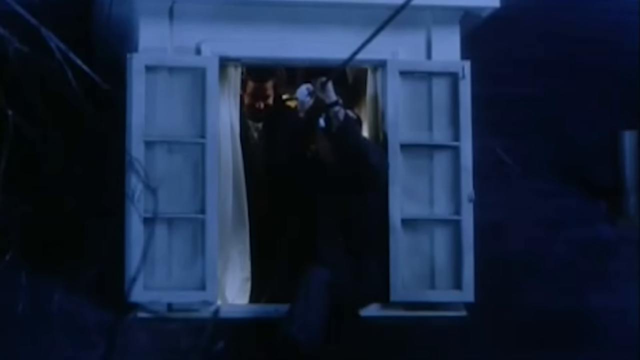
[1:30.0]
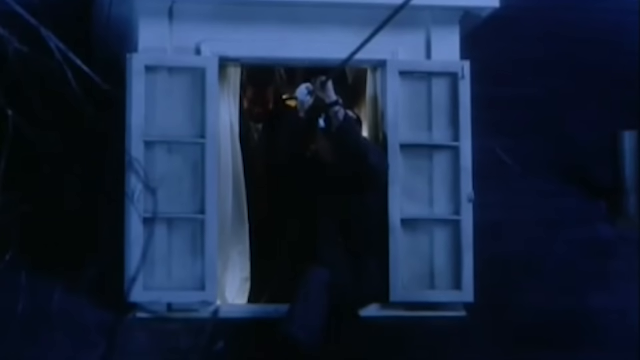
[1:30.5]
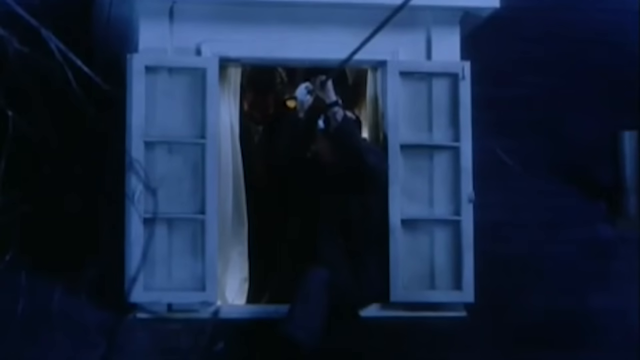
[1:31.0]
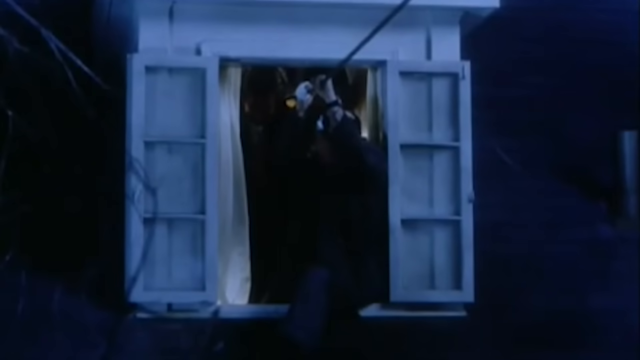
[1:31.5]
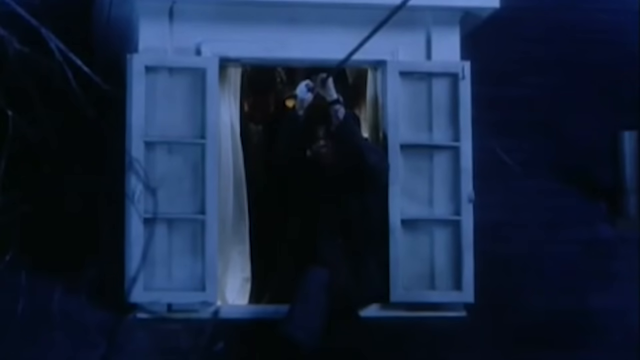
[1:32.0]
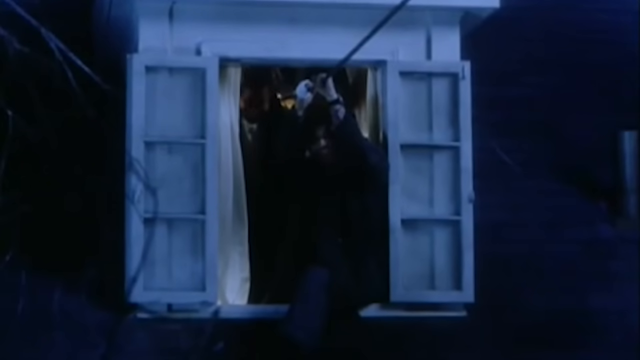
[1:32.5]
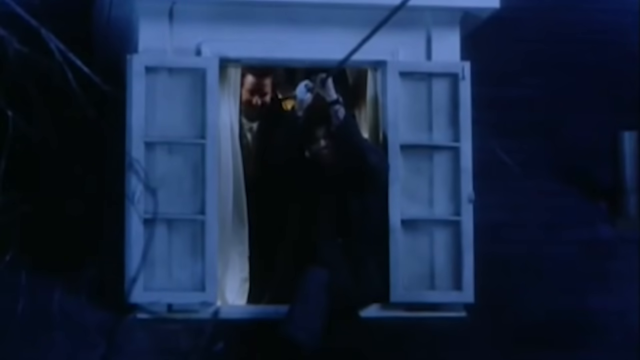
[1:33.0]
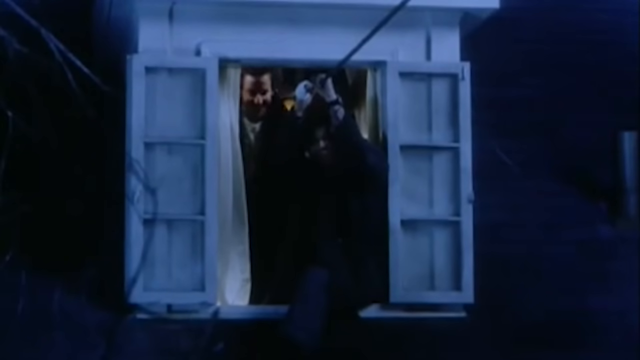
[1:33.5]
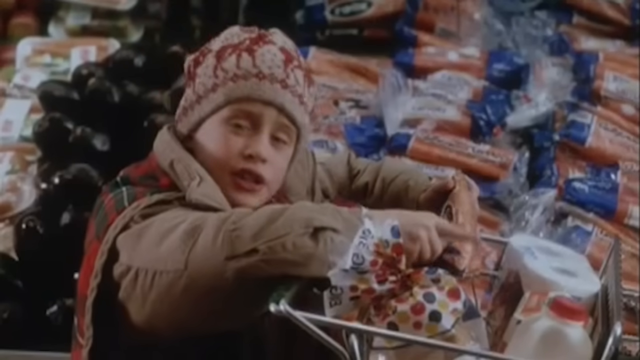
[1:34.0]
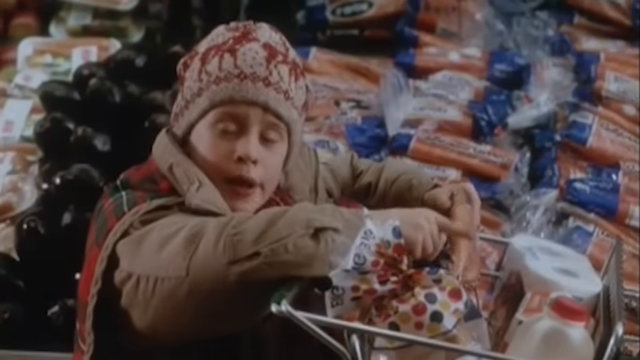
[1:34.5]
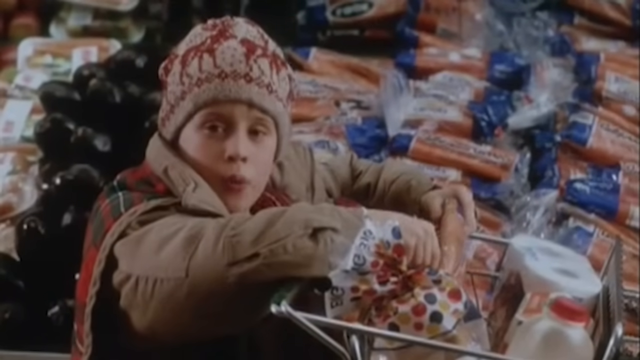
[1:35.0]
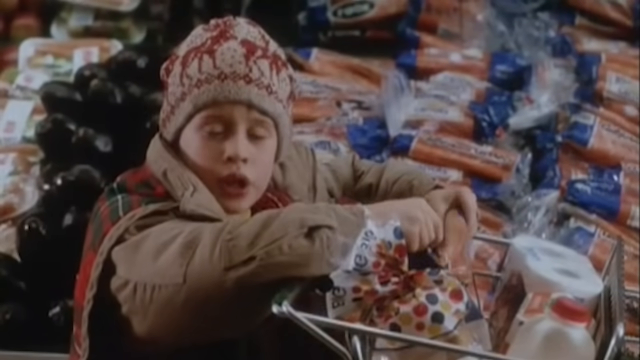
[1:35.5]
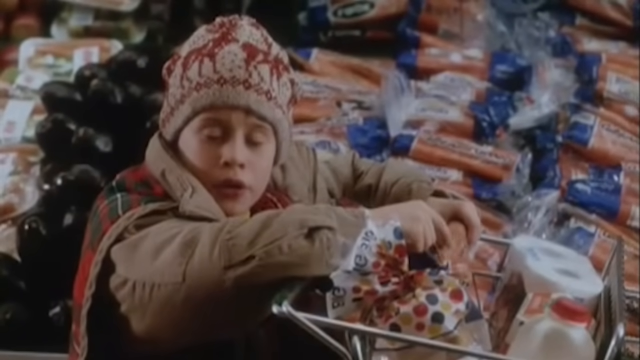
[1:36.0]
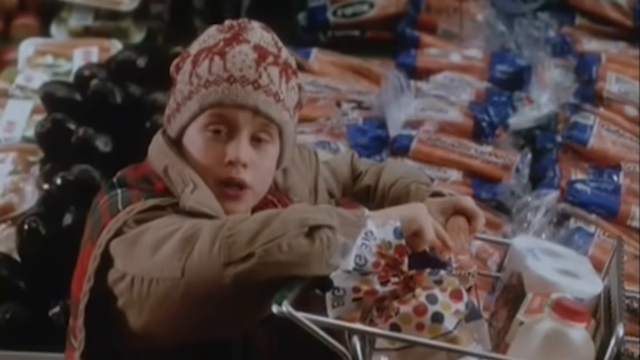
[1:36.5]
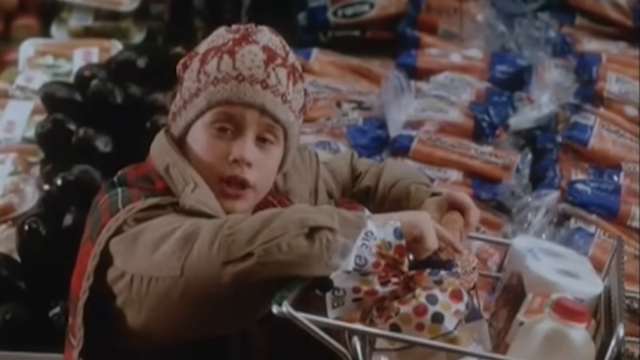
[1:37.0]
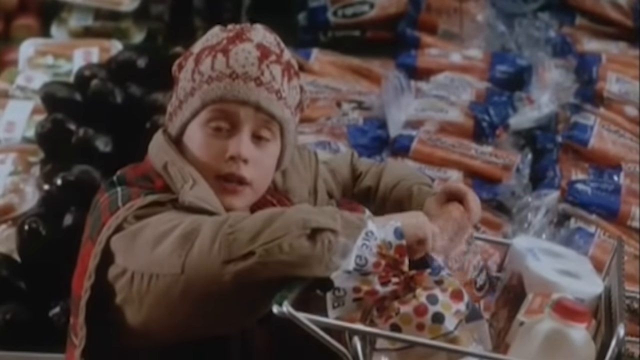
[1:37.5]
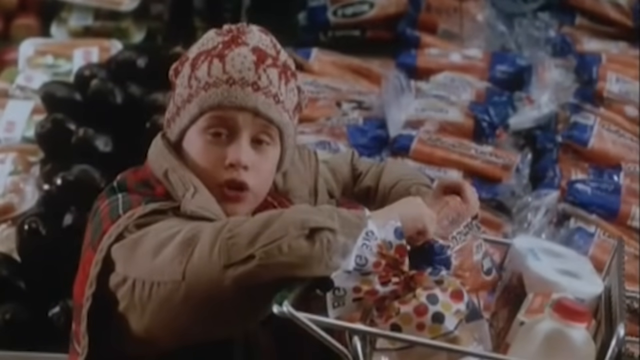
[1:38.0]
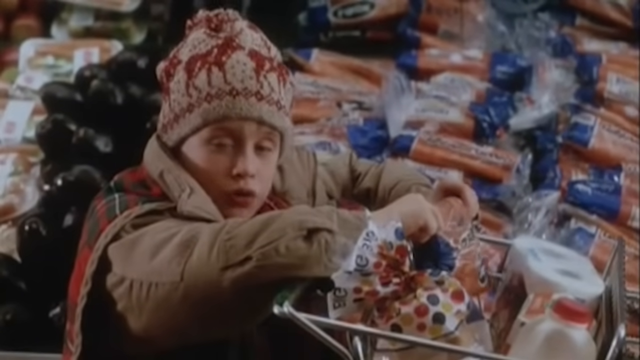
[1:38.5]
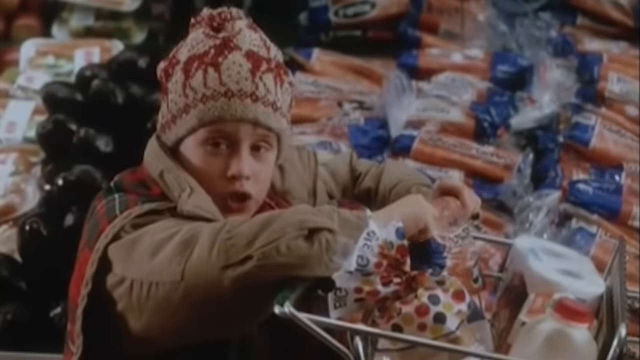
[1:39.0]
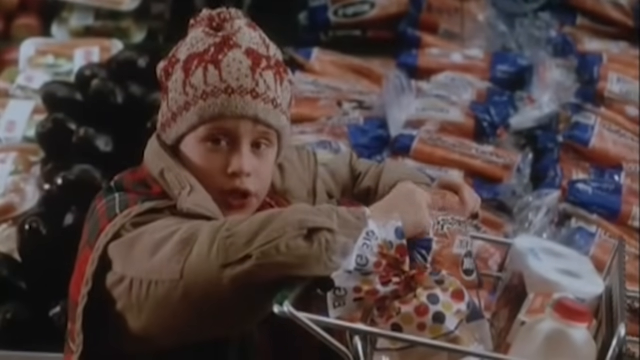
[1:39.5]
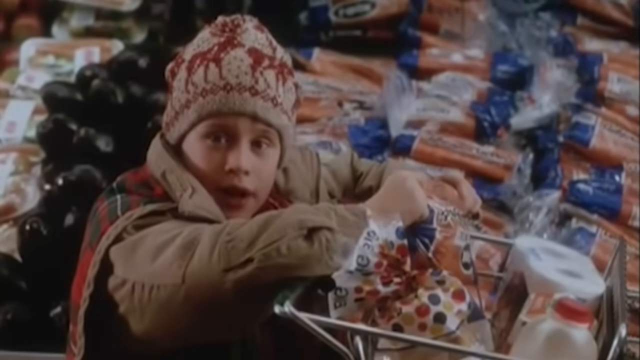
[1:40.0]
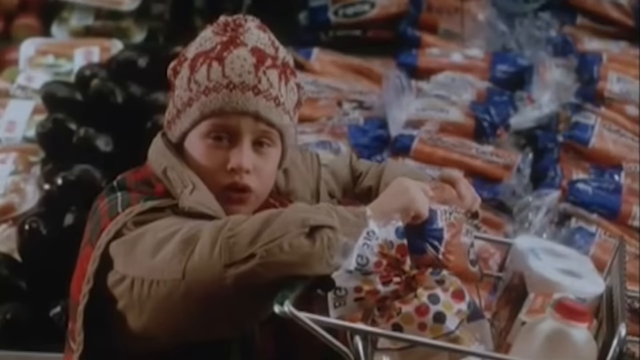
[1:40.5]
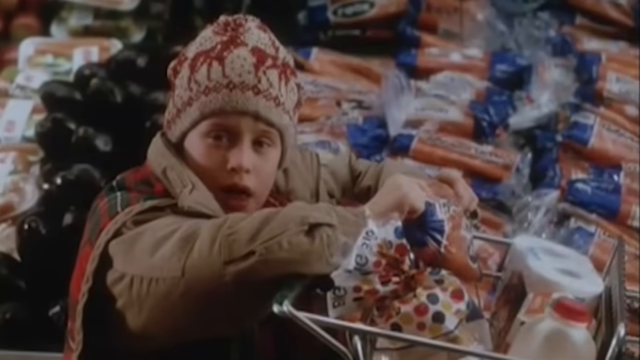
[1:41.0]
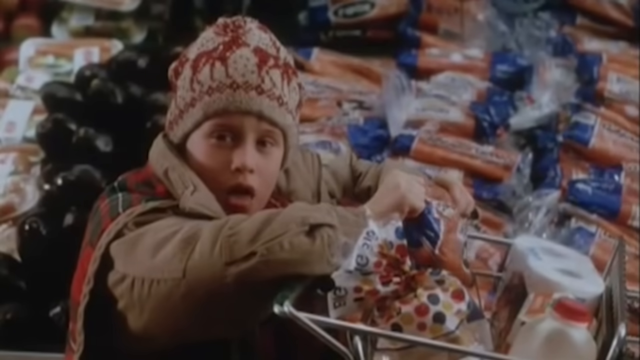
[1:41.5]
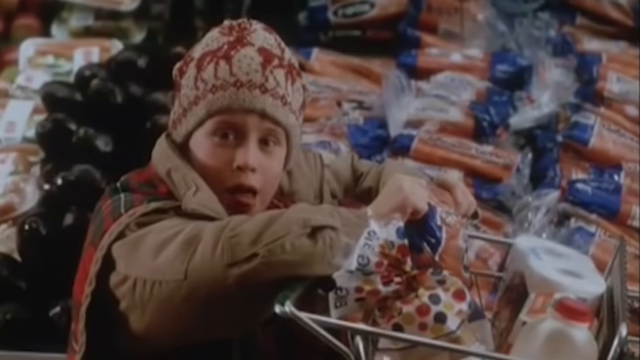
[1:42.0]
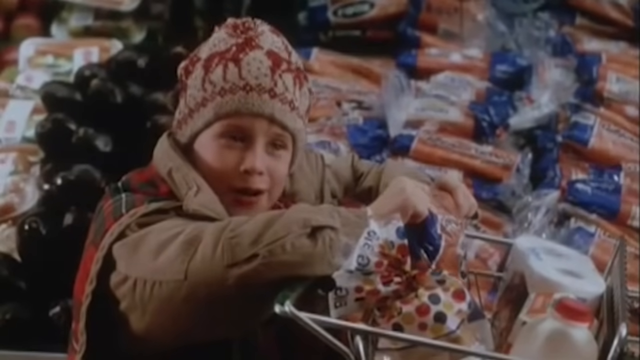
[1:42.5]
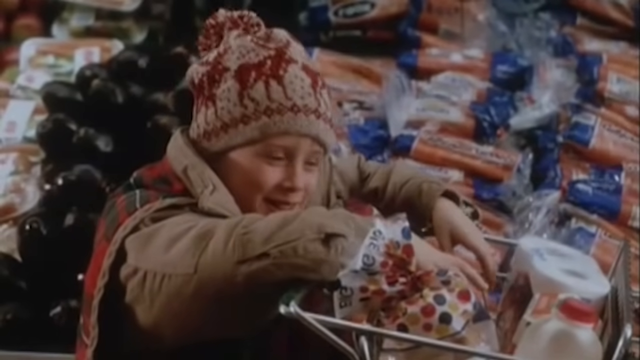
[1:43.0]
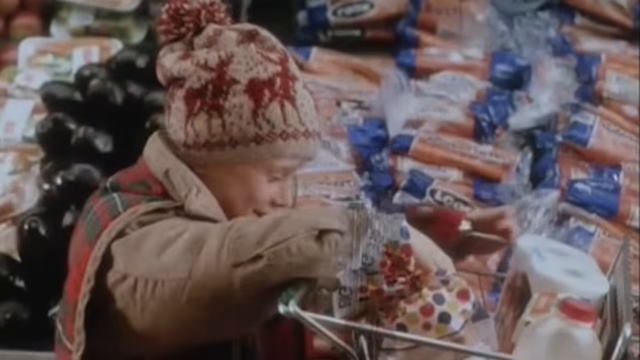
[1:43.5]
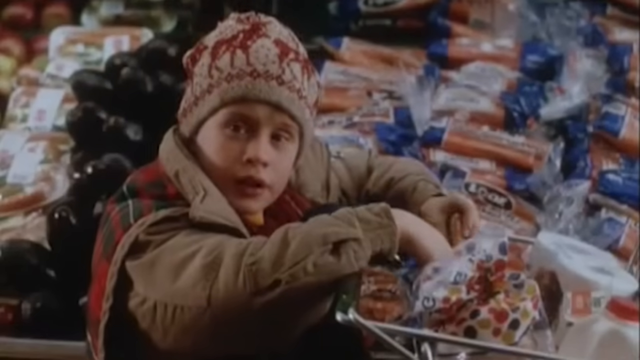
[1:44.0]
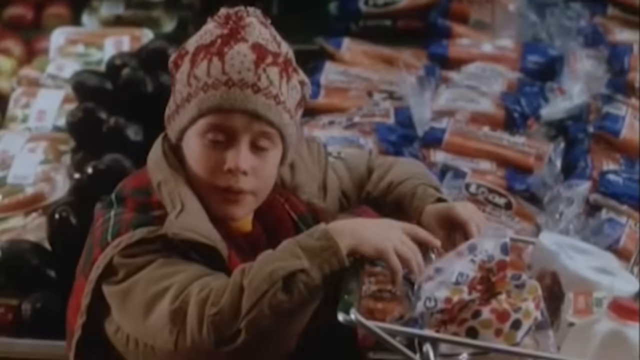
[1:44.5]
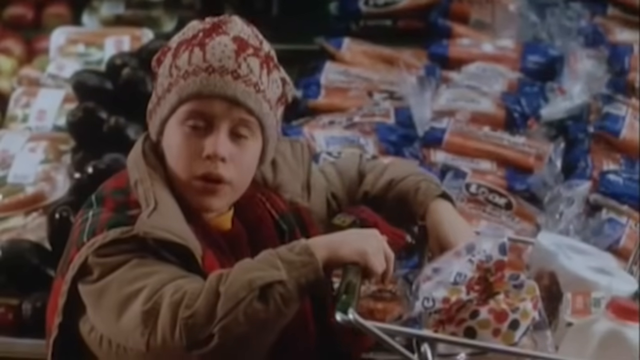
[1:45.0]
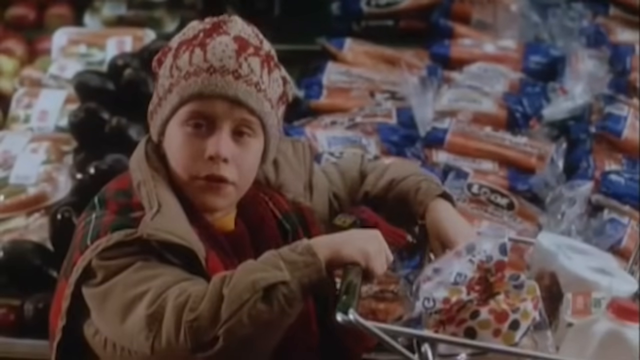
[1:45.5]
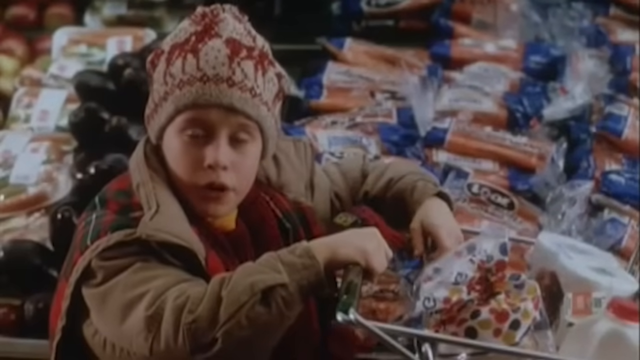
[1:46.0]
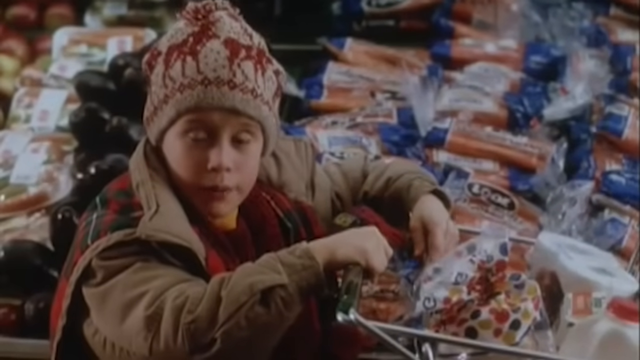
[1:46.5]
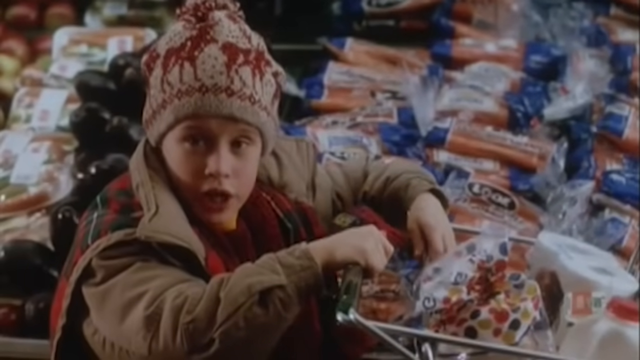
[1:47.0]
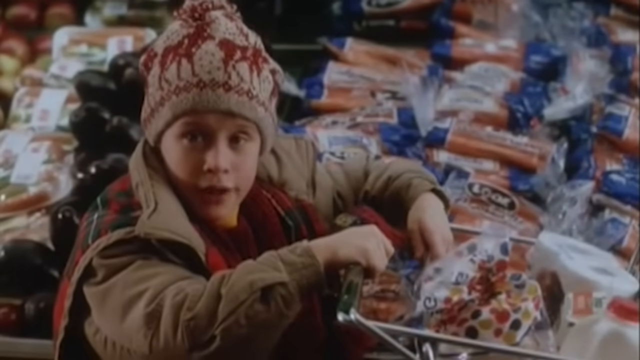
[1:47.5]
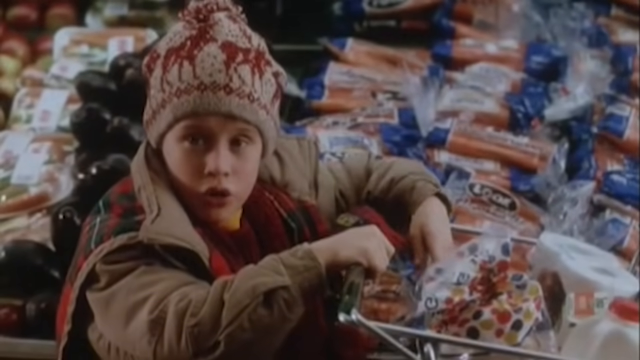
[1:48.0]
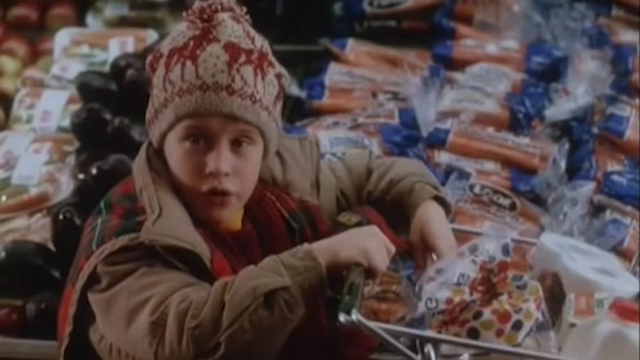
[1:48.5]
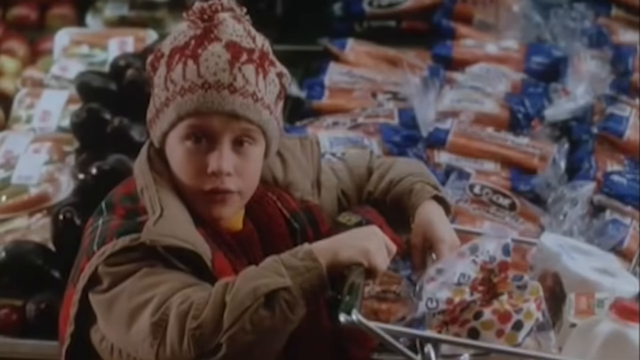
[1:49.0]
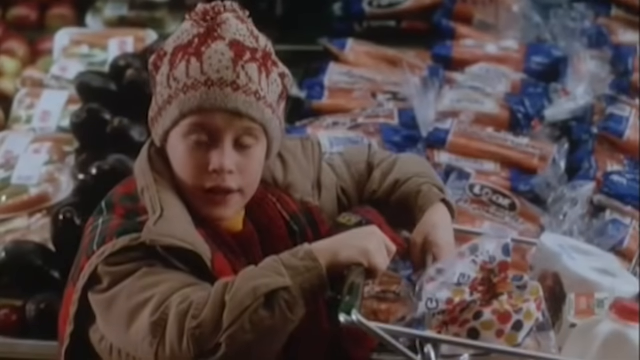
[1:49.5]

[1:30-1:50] Two thieves try to cross a certain distance on the line. Outside the window they are peering through it is dark, since it is night. They wear gloves, blue and white. Next, Kevin looks at some bread packaging, leaning forward with both hands. His hat has a red stag printed on it. He talks to someone and puts his fingers into the bread box. He wears some sort of brown jacket over a red T-shirt with a Christmas feel. The back of the jacket has Christmas colors, red with green, with some lines on the green. He is about to take the groceries.